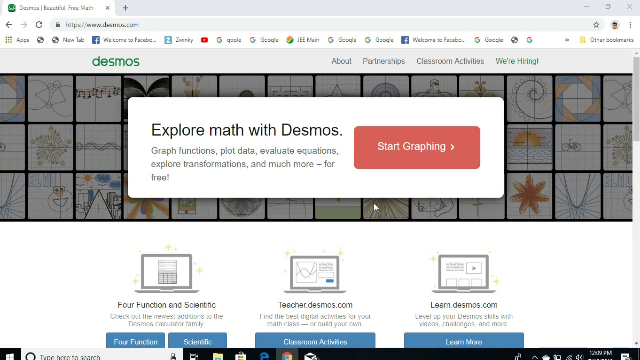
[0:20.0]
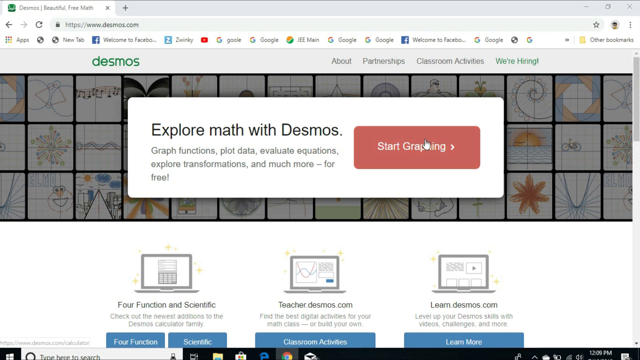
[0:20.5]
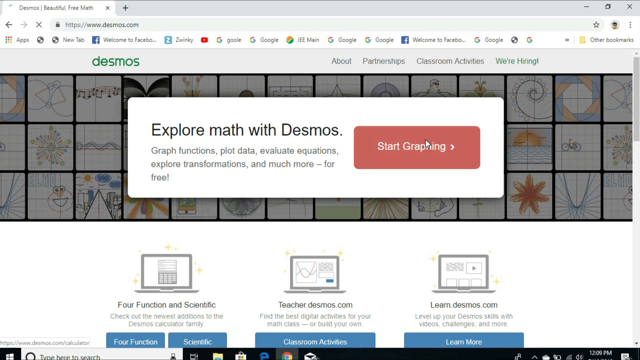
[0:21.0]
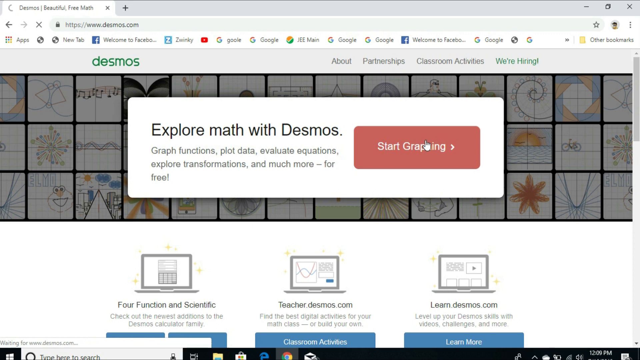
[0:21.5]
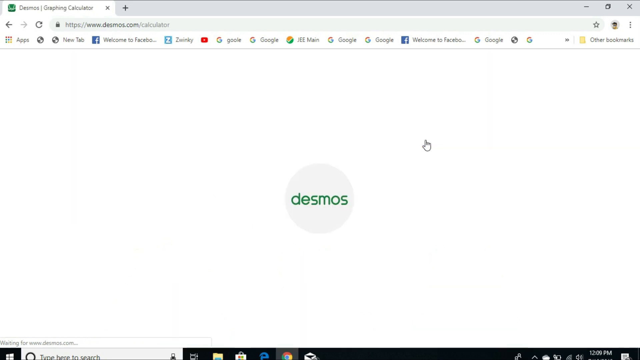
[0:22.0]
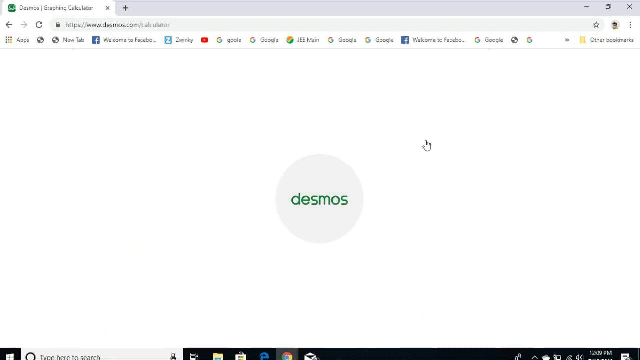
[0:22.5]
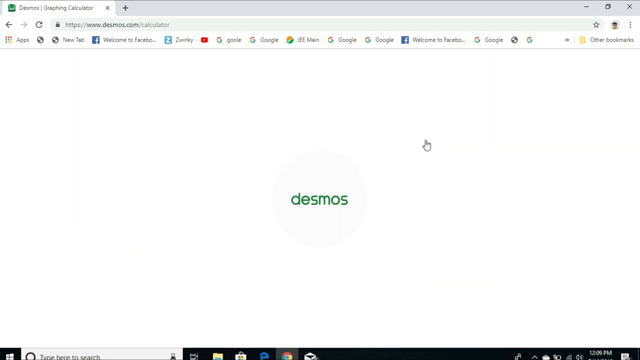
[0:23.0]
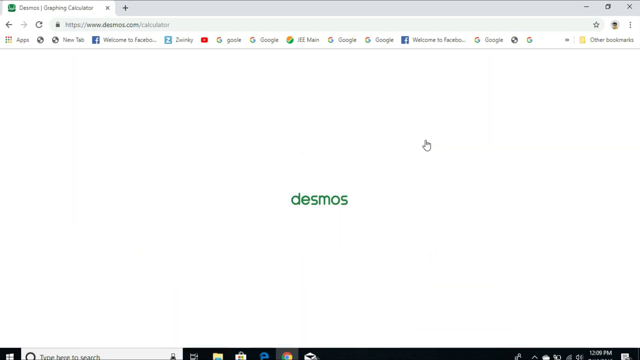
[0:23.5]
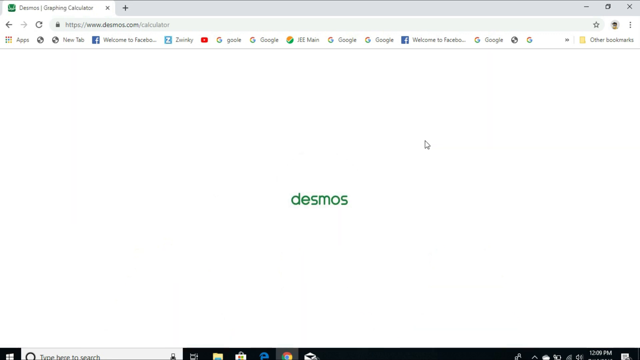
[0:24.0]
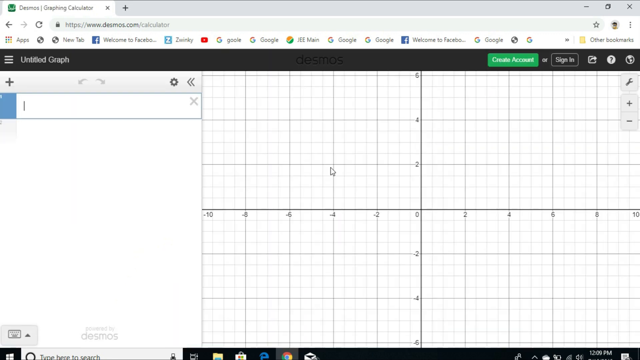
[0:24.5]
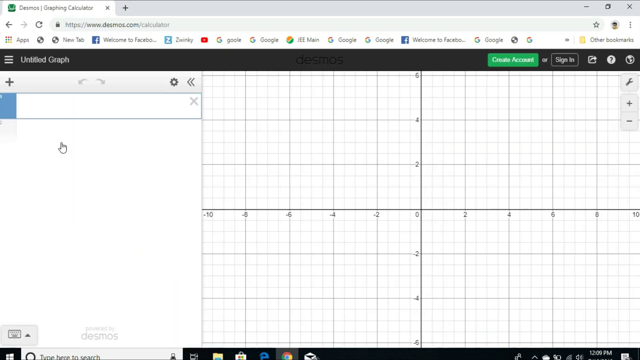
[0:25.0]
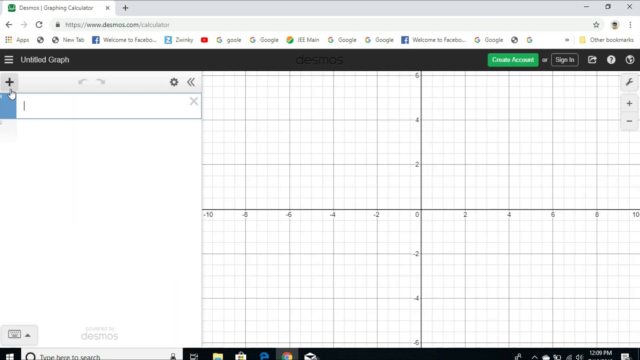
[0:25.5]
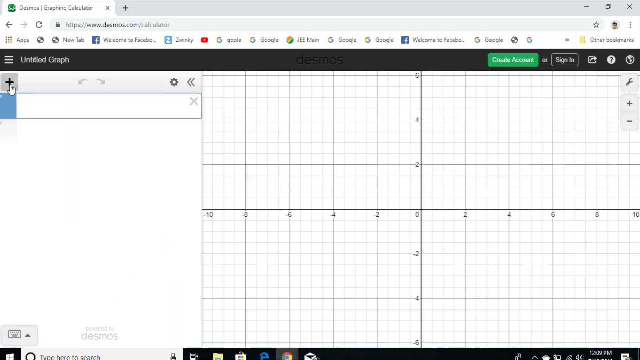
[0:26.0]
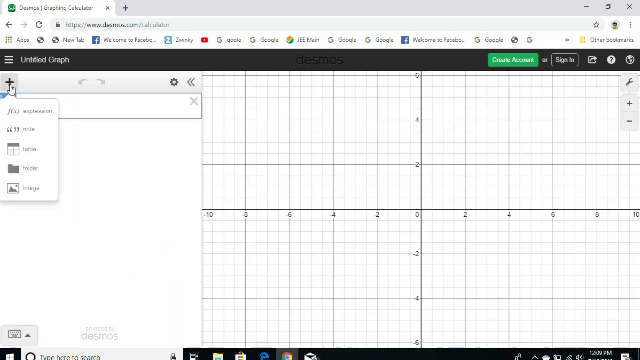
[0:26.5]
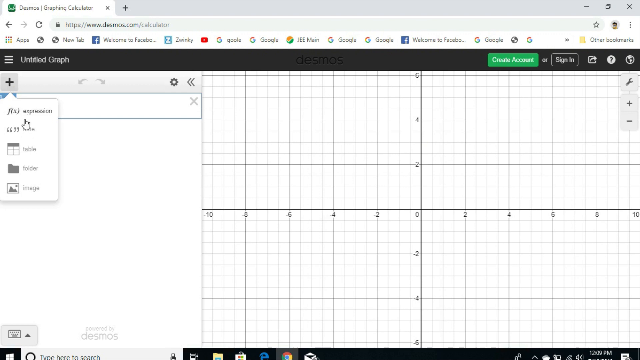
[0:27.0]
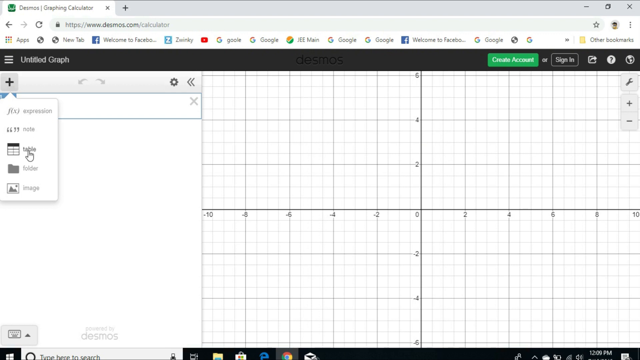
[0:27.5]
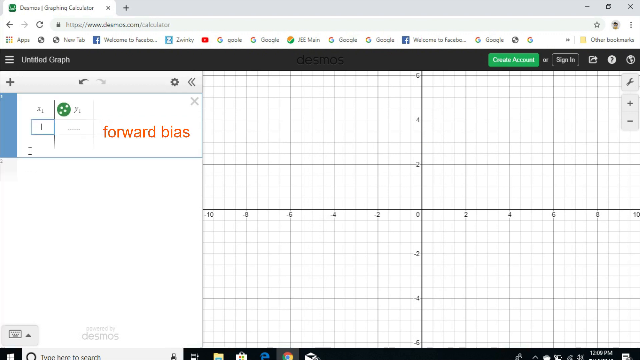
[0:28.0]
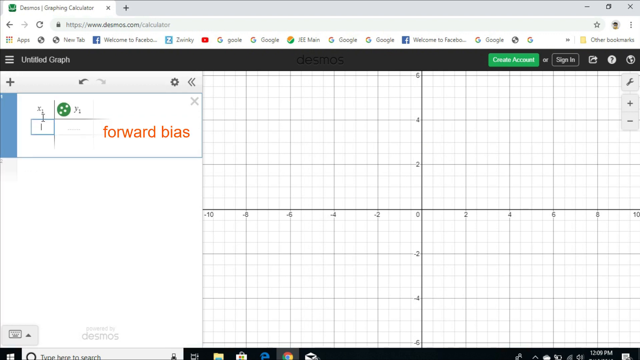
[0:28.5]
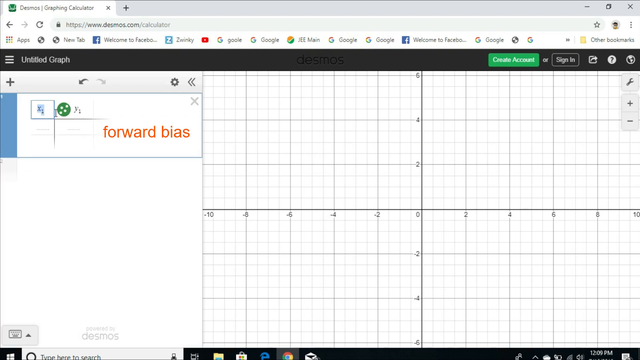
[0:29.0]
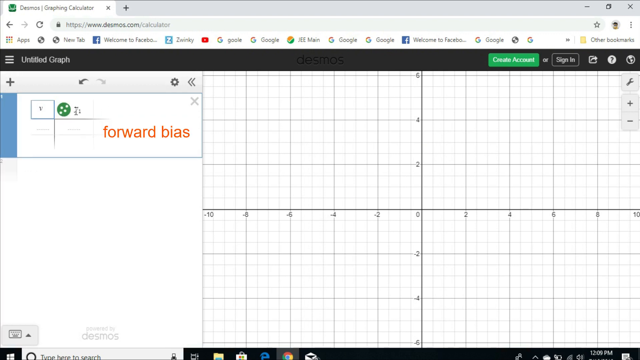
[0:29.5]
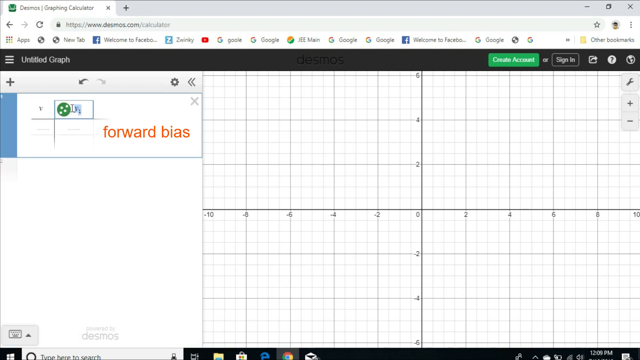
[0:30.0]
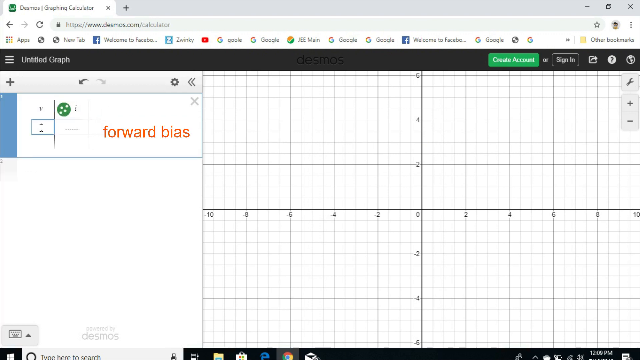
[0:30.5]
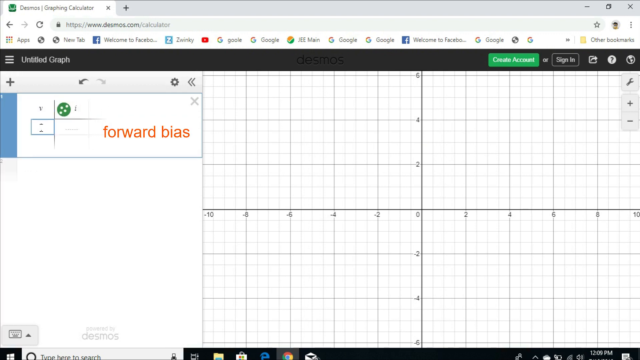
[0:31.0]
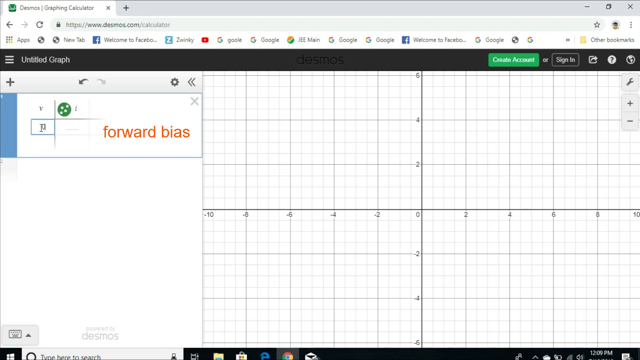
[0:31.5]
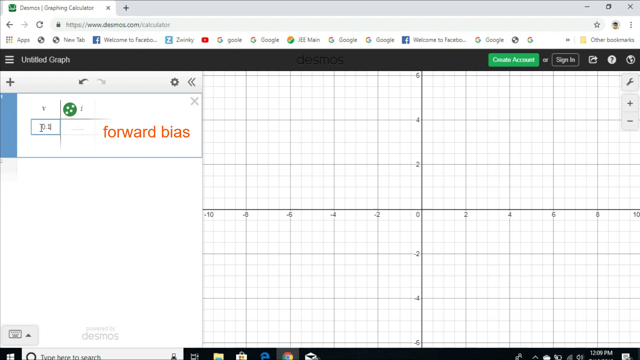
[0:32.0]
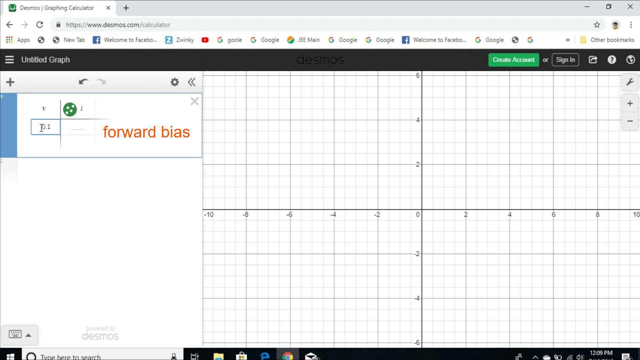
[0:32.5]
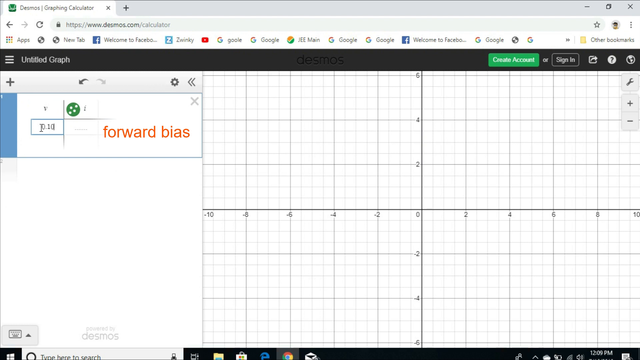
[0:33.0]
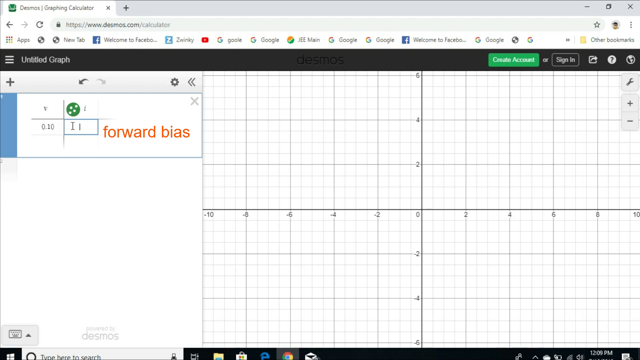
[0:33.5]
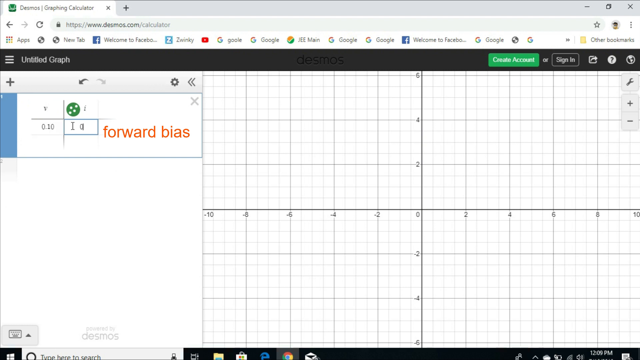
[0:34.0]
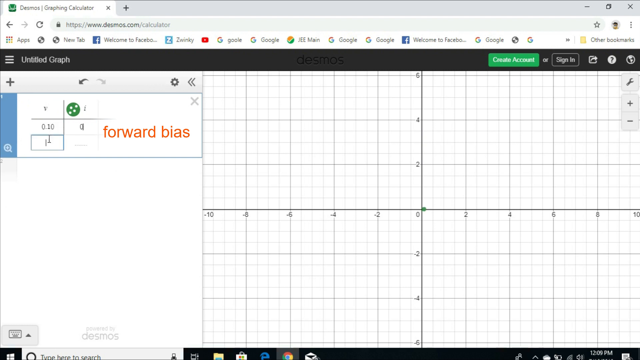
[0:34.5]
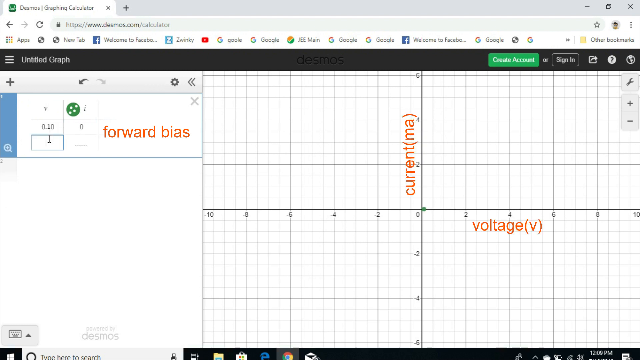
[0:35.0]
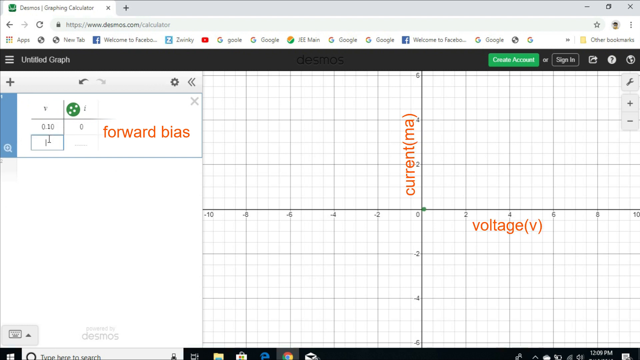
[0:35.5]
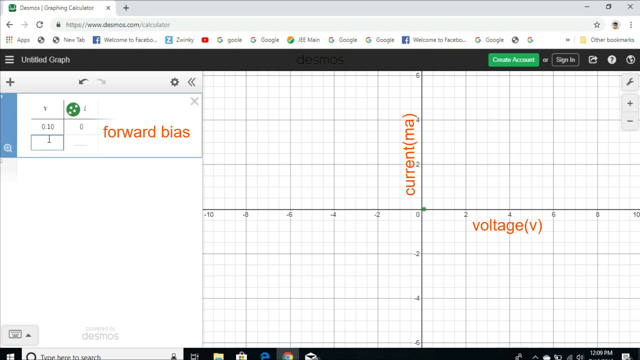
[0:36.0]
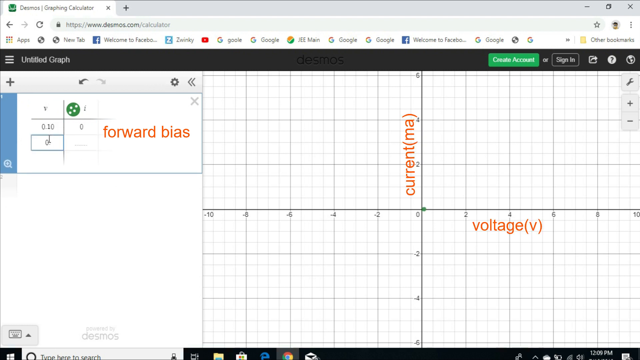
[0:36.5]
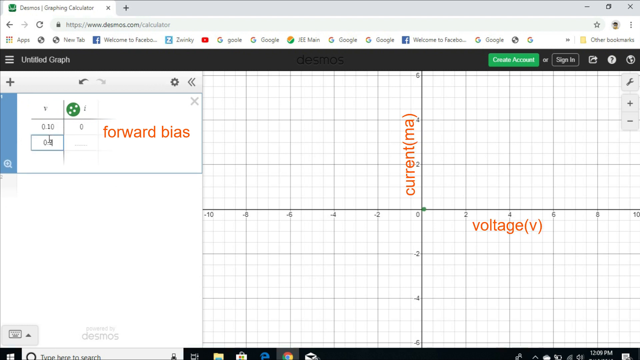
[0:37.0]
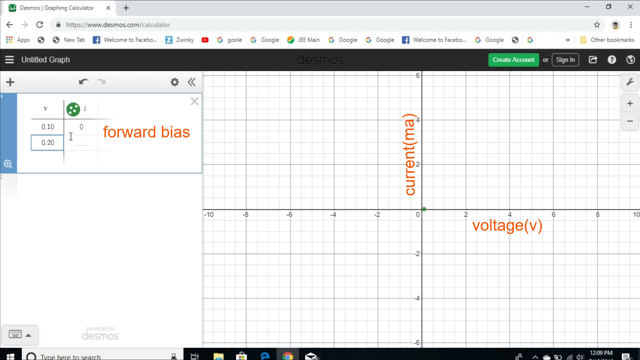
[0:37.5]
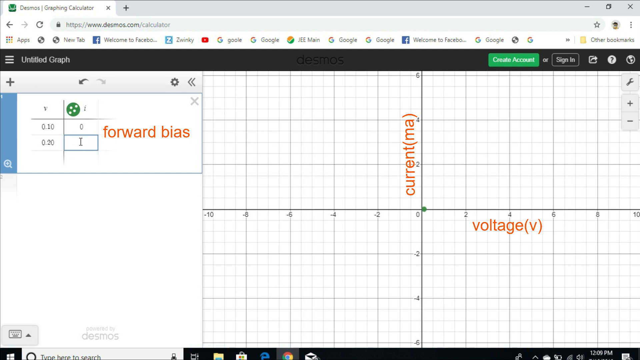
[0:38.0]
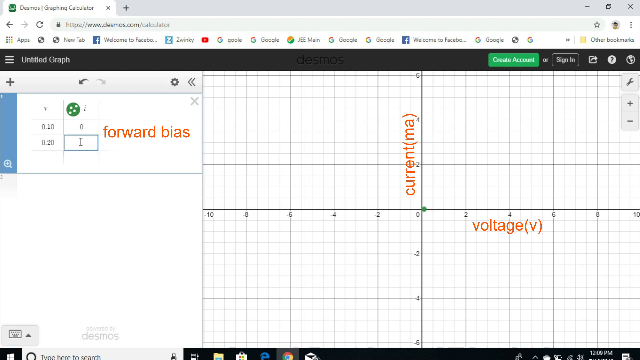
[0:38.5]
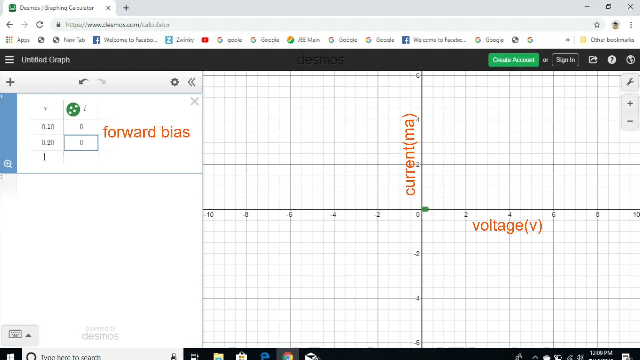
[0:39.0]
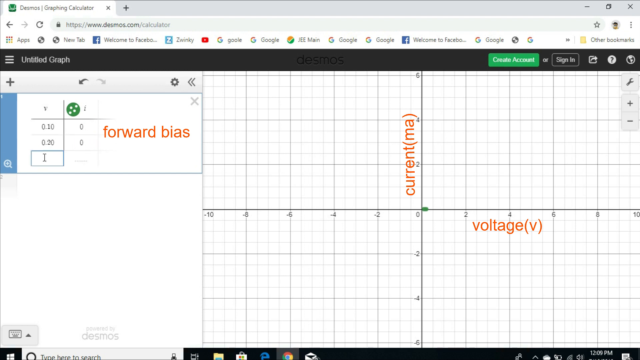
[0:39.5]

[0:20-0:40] The person recording presses the big "start graphing" button in the middle, and the page loads with the Desmos logo in the middle. The Desmos interface then appears, with an XY line graph on the right and an empty area on the left for inserting equations. The person presses the plus button, opening a dropdown with expression, note, table, folder and image, and clicks table. An empty table appears with an annotation in orange writing next to it that reads "forward bias". They label the X column V and the Y column I, then enter 0.10 under V and 0 under I. On the graph, the x-axis is annotated in orange with "voltage V" and the y-axis with "current MA". They then enter 0.2 in the V column and 1.0 in the I column.